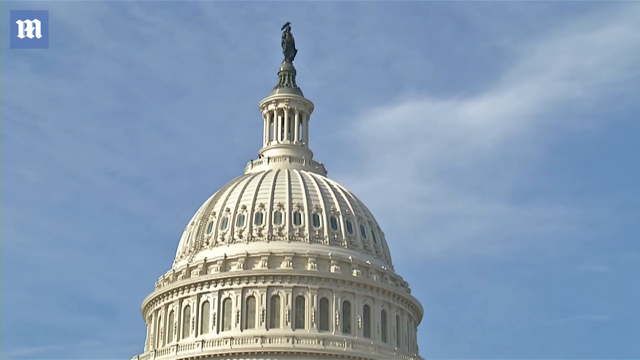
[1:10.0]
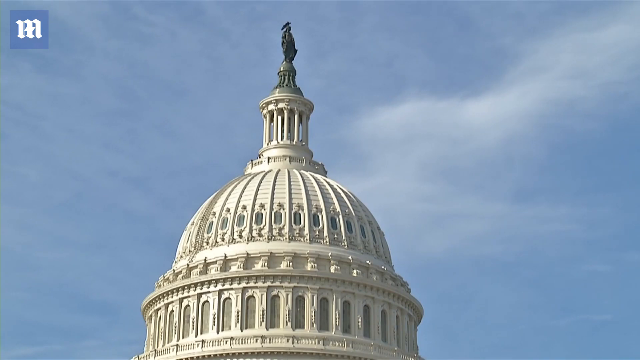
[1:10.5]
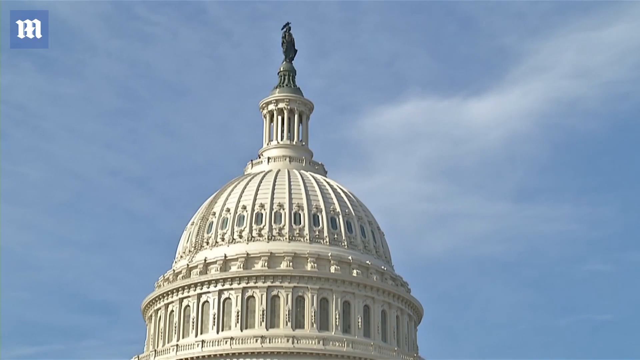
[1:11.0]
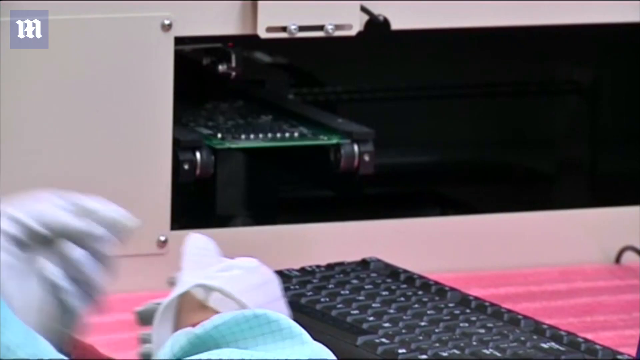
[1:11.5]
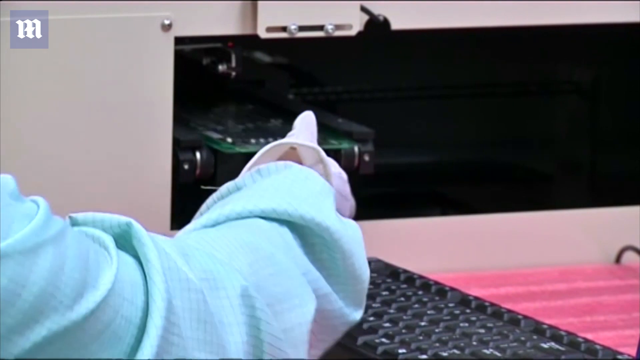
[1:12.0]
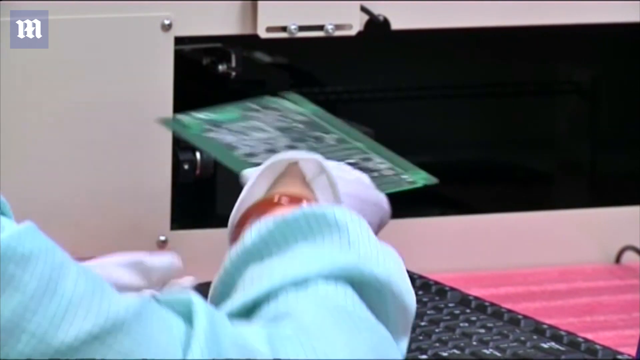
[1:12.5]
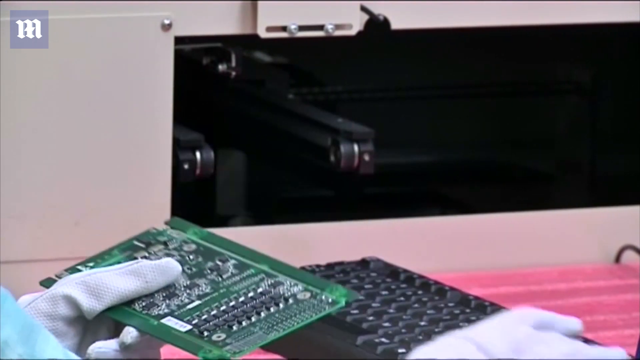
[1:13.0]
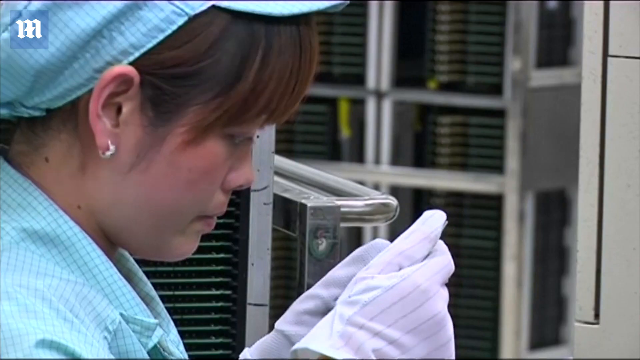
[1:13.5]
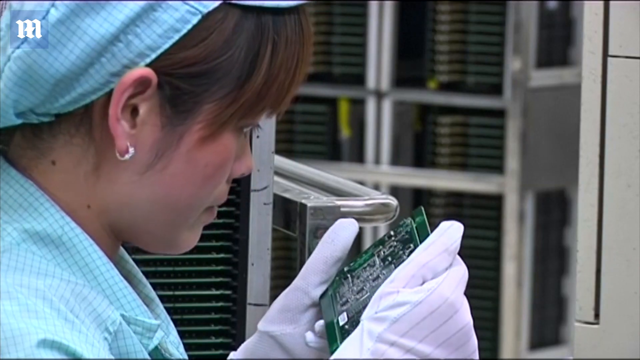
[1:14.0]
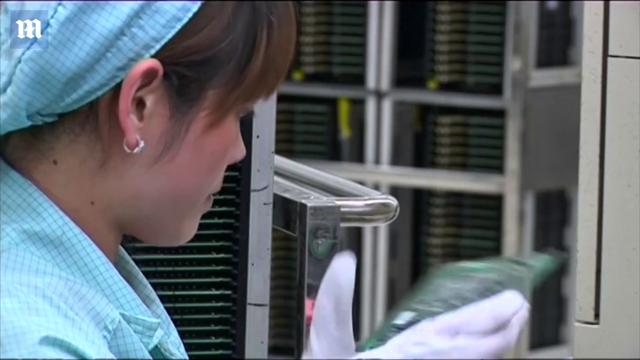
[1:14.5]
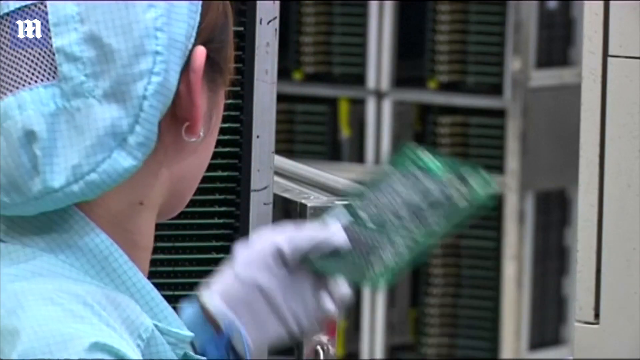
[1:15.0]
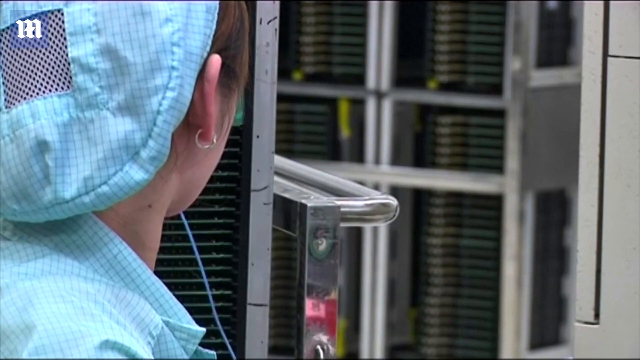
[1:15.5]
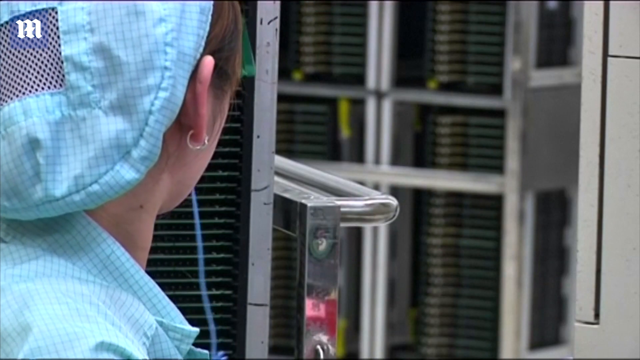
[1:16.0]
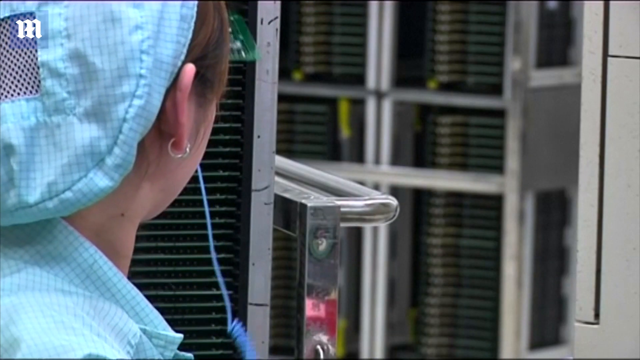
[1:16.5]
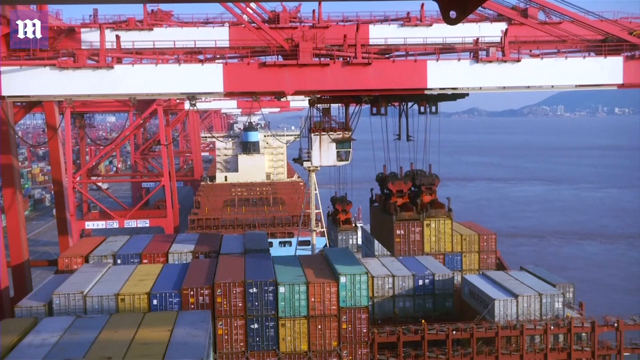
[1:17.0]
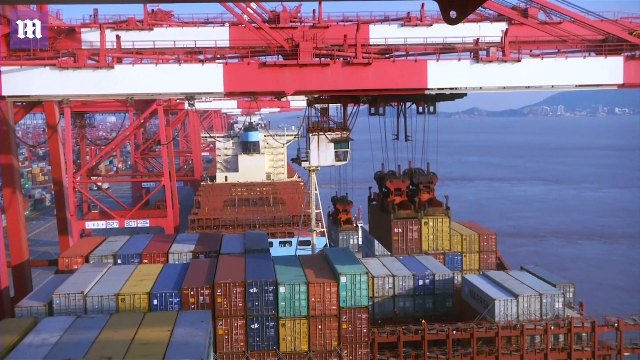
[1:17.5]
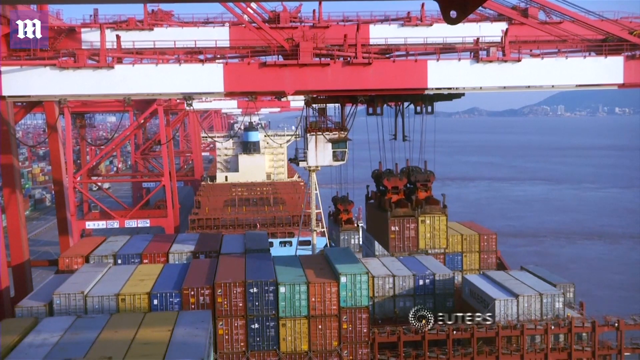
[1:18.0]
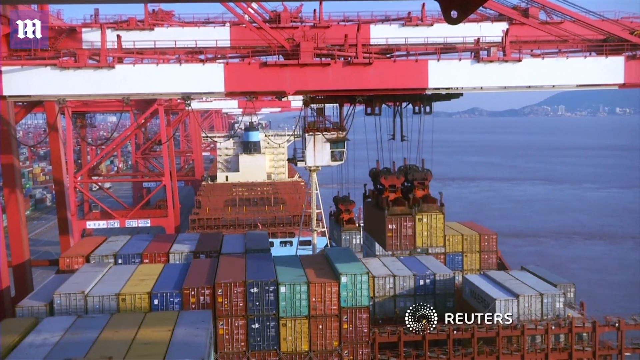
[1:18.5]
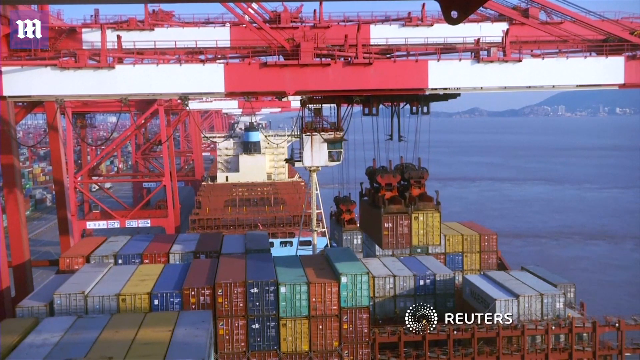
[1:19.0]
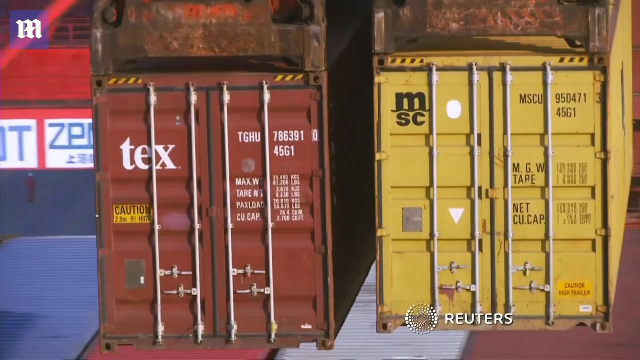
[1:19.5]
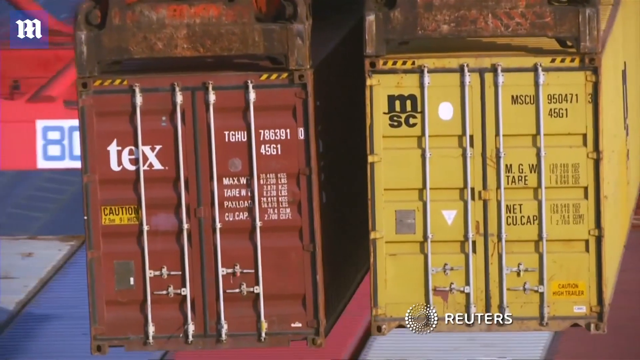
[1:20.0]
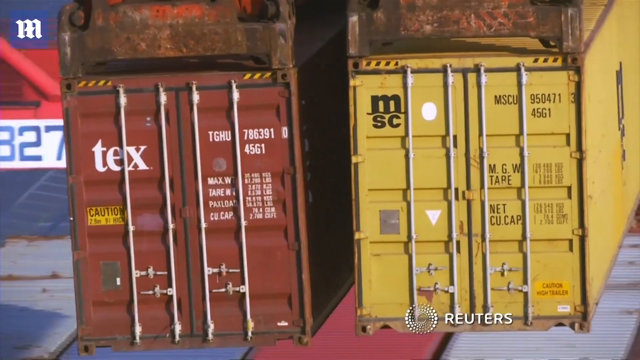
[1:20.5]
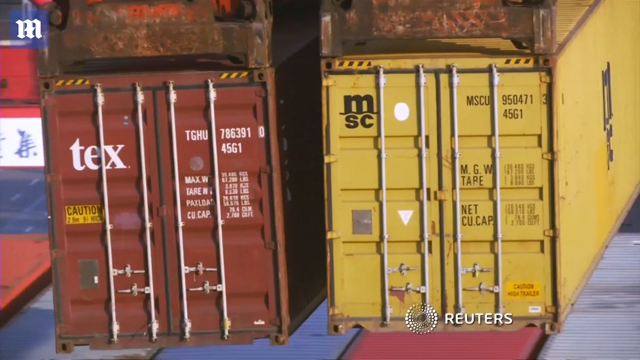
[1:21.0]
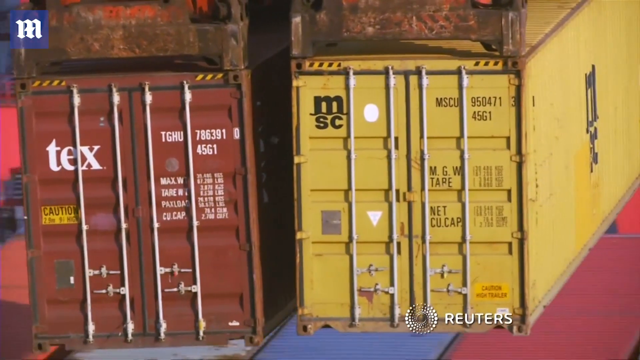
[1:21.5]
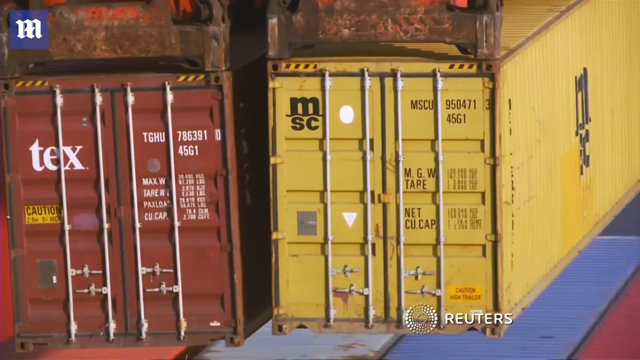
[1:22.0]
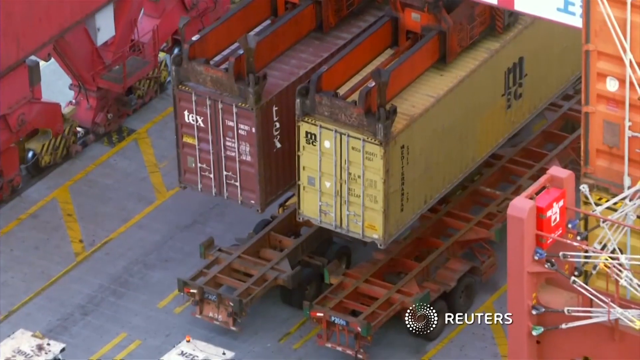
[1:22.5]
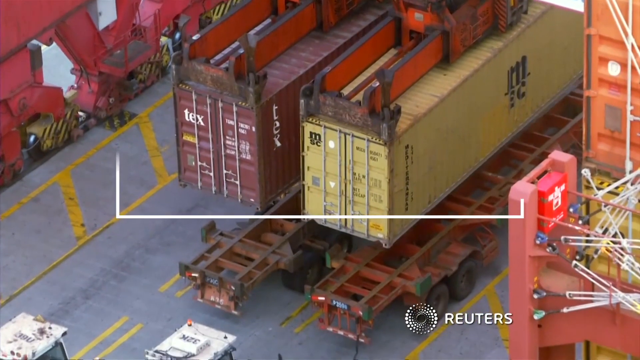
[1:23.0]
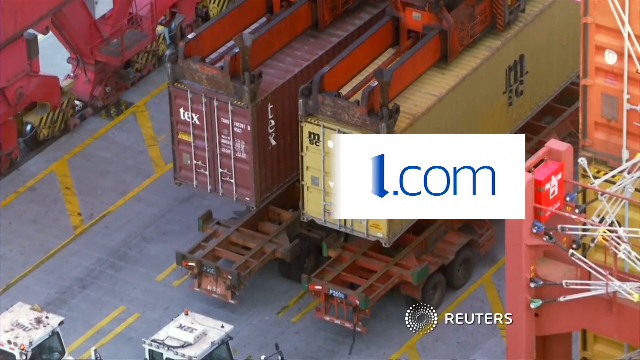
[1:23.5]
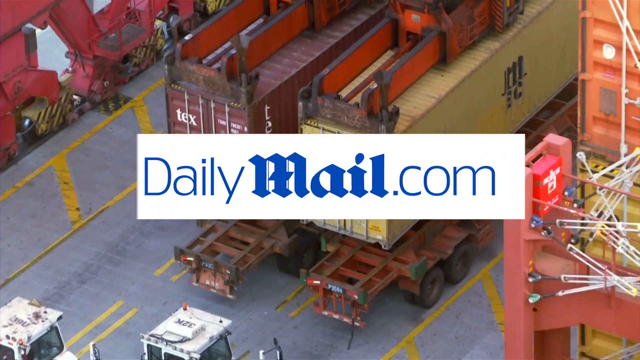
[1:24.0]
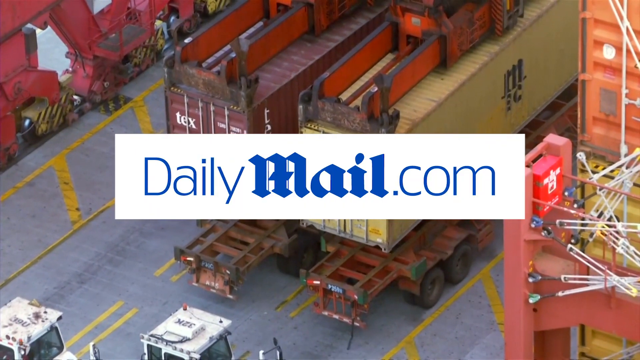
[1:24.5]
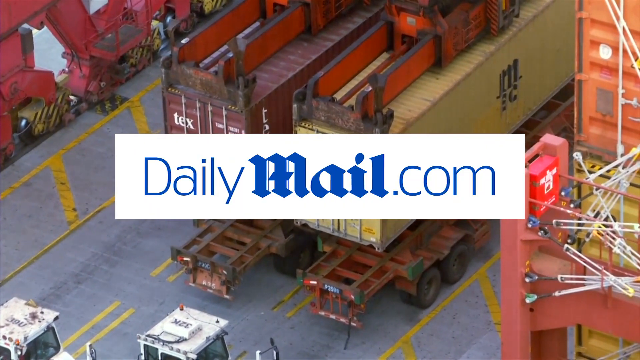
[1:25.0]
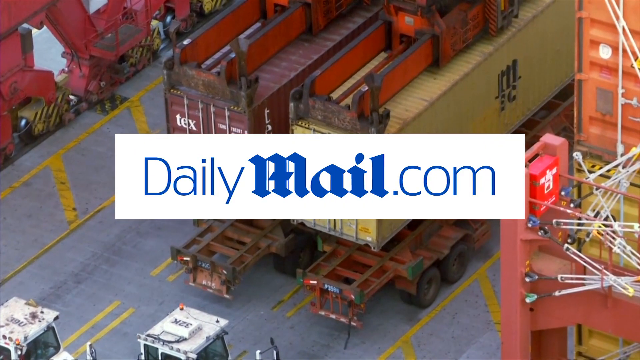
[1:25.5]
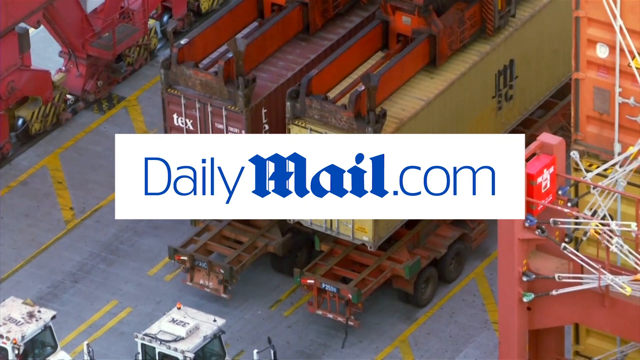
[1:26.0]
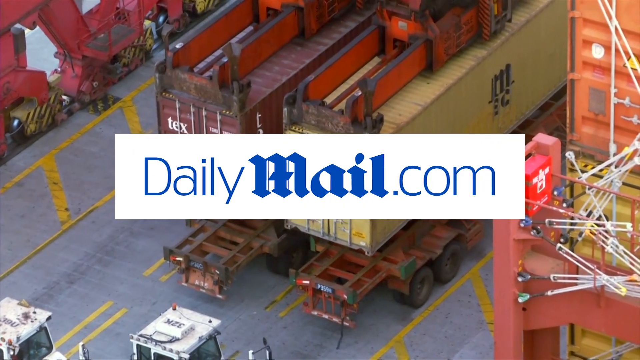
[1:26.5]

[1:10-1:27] The video points to DailyMail.com, the DailyMail app, and DailyMail pages on social media platforms.